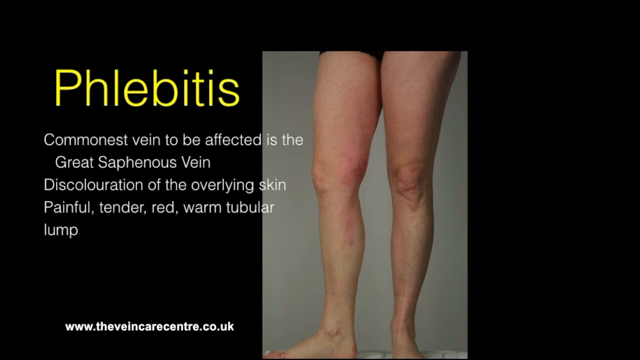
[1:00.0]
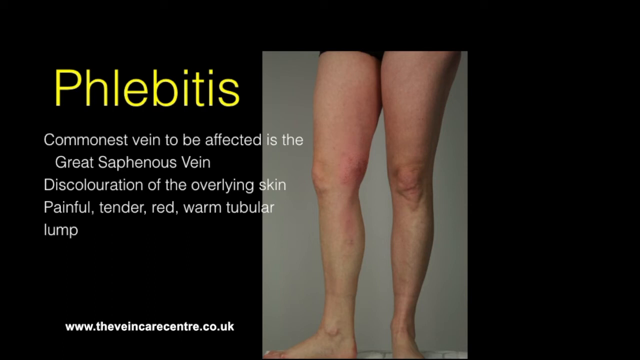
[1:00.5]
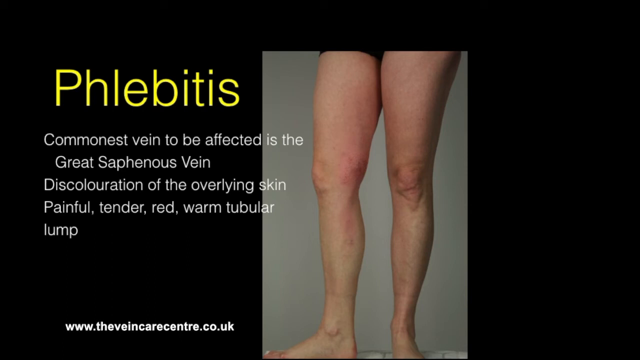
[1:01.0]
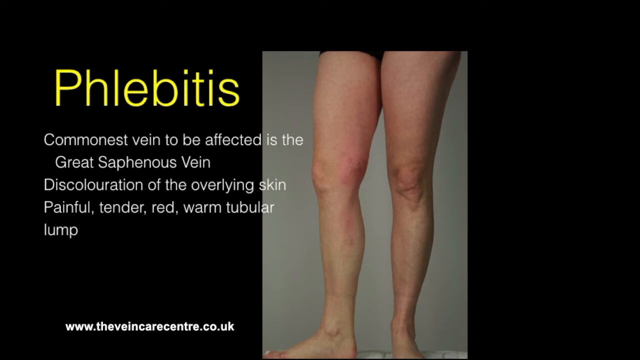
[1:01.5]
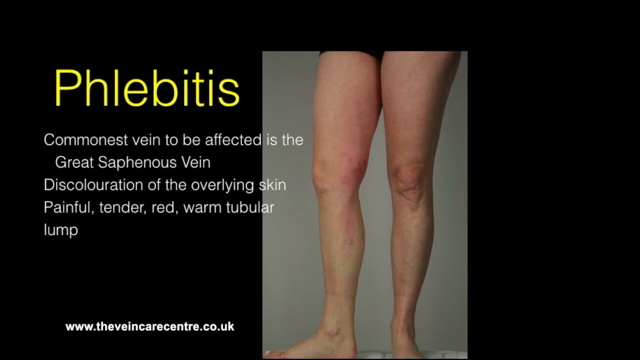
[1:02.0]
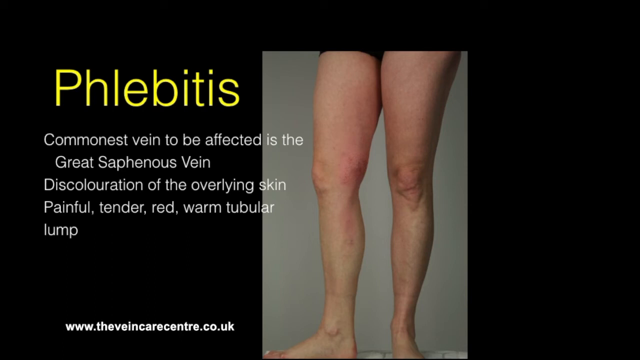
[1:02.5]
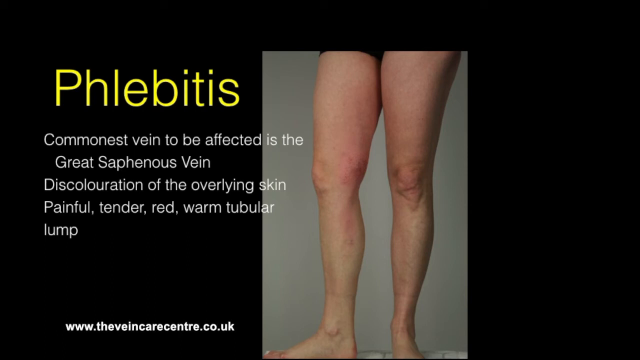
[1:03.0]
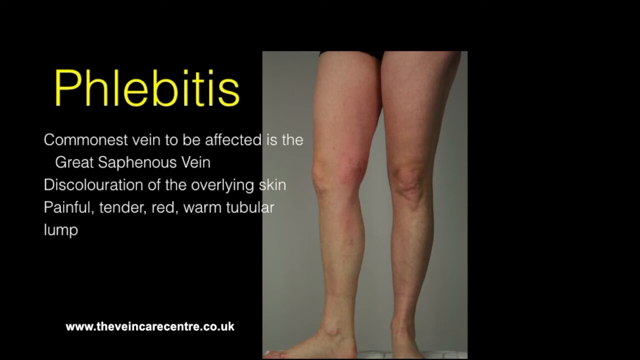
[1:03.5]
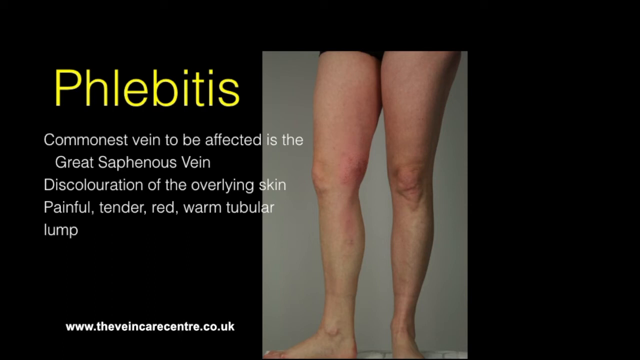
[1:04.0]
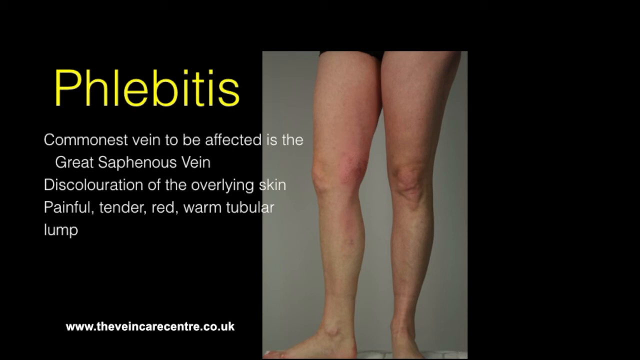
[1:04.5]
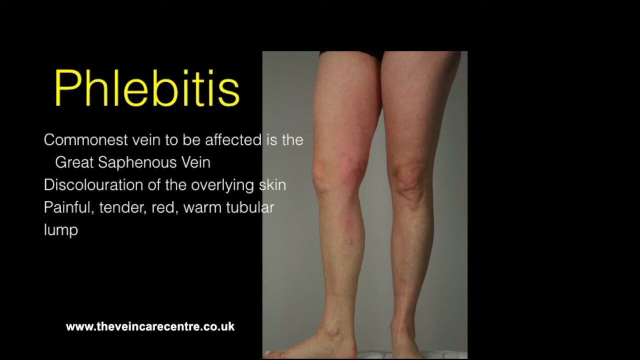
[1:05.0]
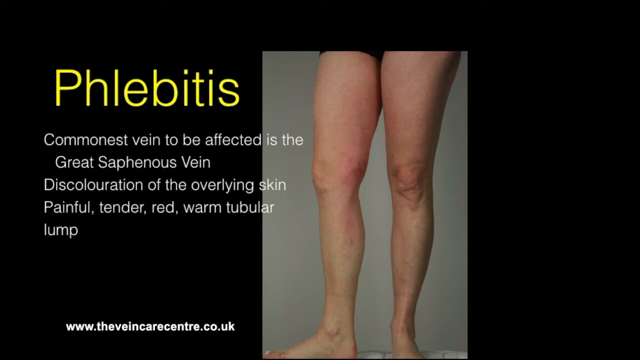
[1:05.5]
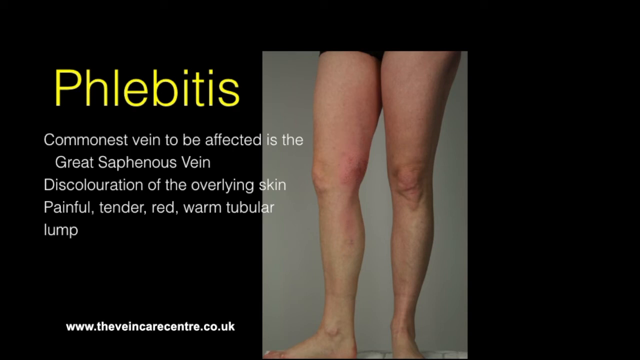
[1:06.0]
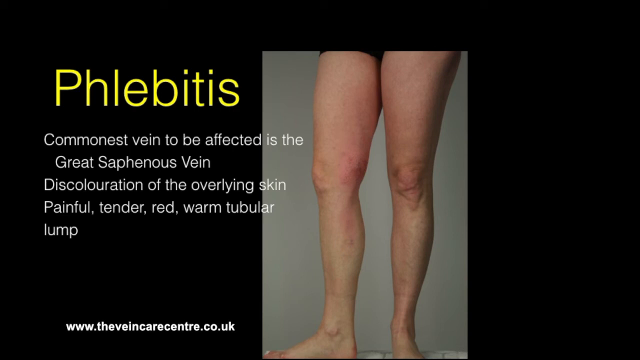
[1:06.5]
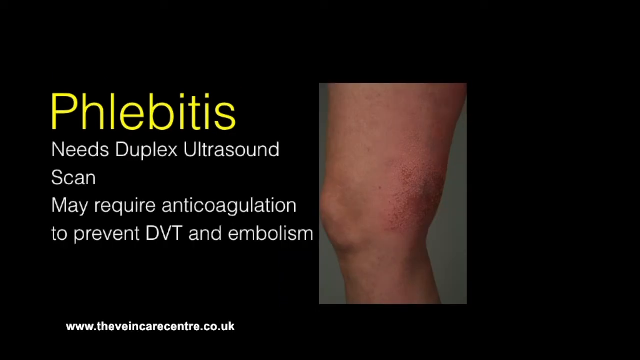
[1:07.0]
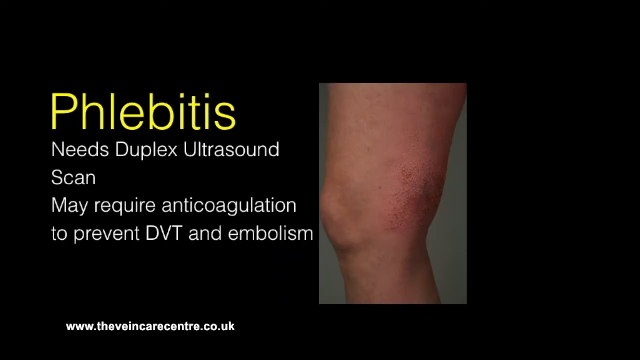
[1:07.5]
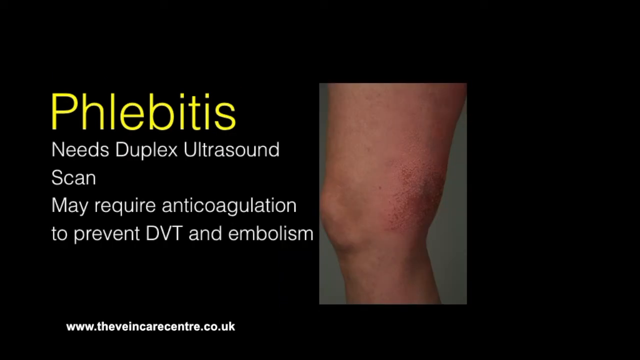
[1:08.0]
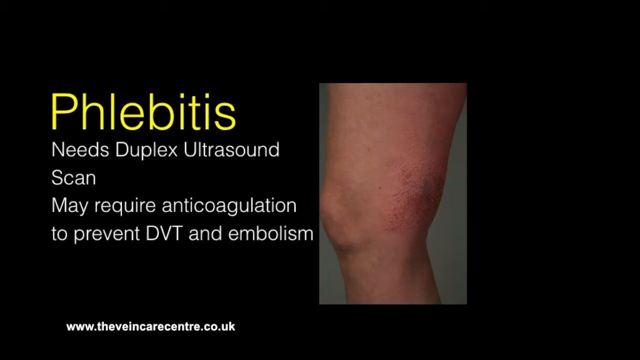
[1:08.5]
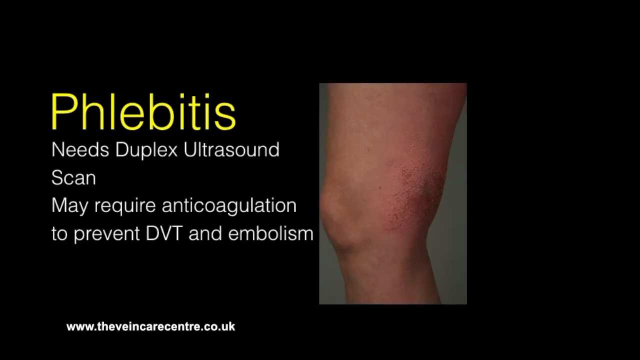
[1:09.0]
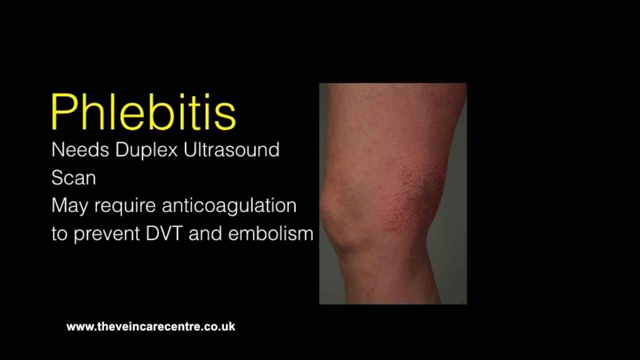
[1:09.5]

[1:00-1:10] The picture of the legs and the description of phlebitis continue, and then text reads "phlebitis needs duplex ultrasound scan may require anticoagulation to prevent DVT and embolism".